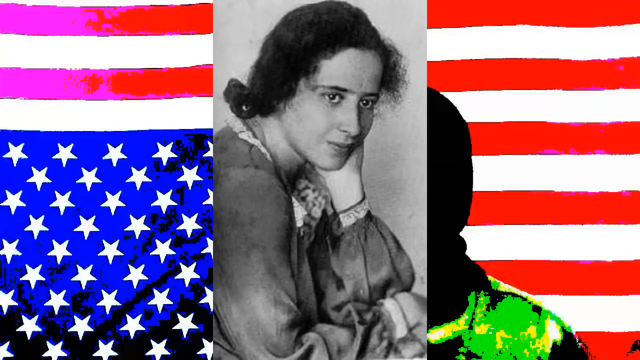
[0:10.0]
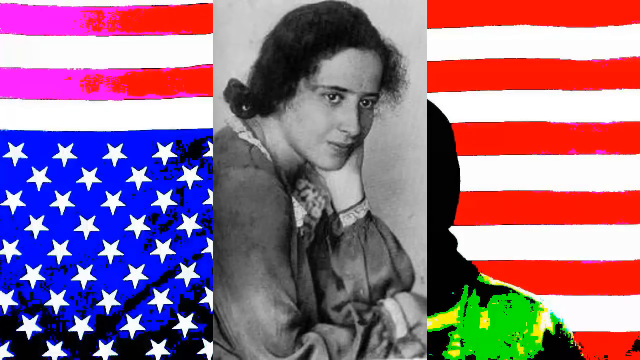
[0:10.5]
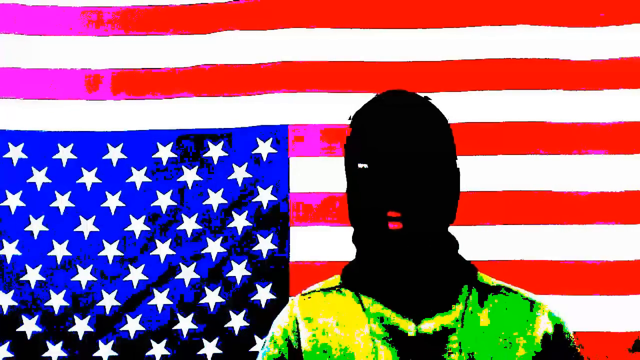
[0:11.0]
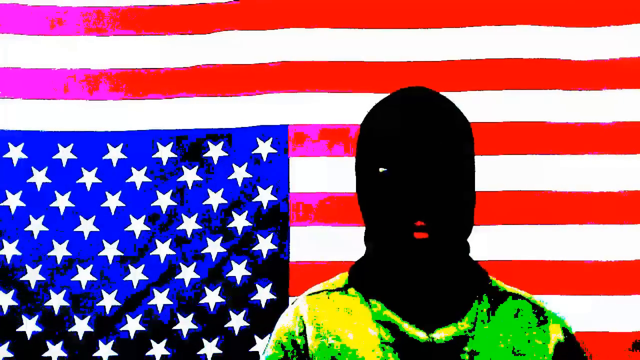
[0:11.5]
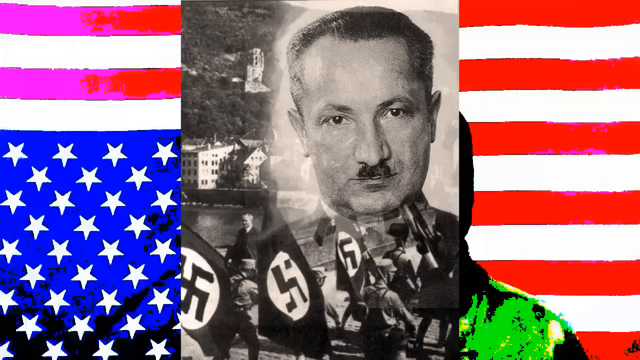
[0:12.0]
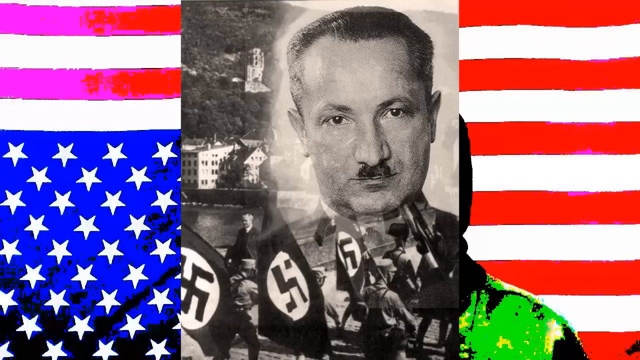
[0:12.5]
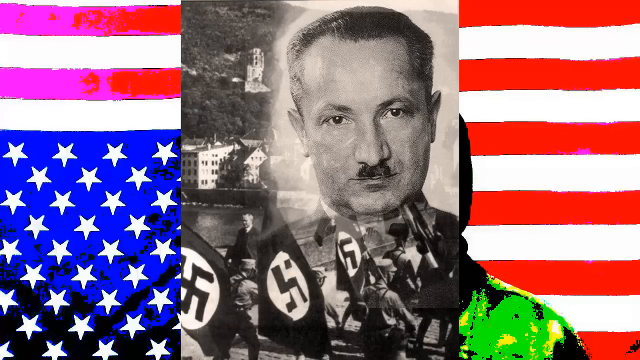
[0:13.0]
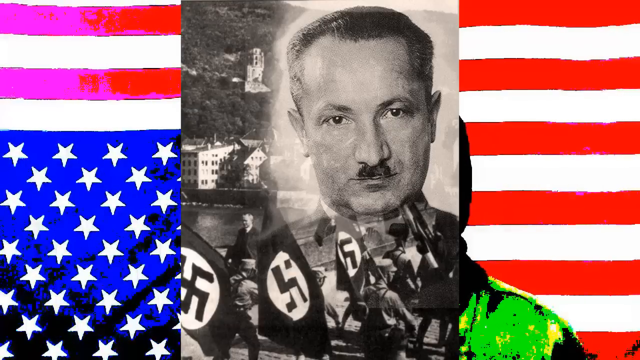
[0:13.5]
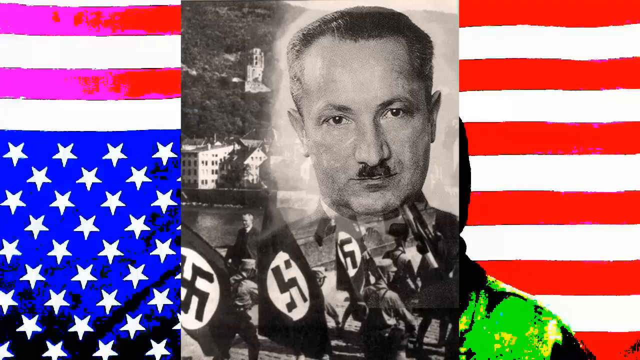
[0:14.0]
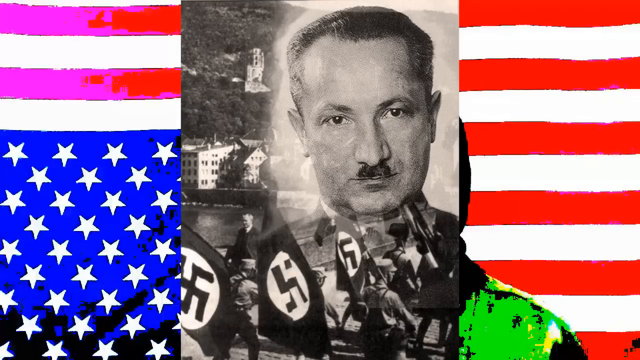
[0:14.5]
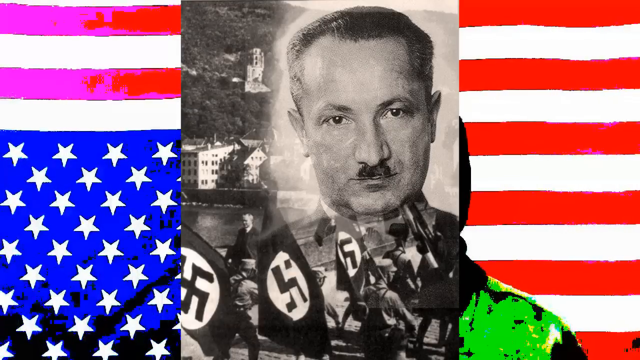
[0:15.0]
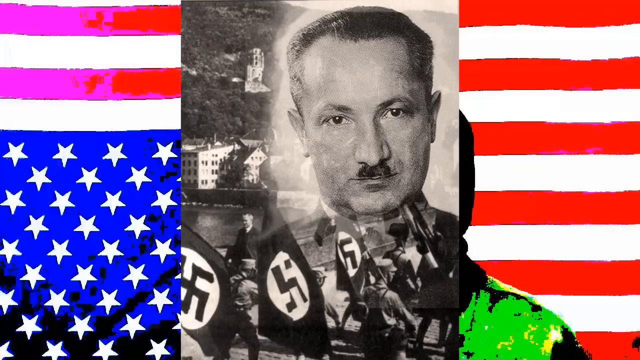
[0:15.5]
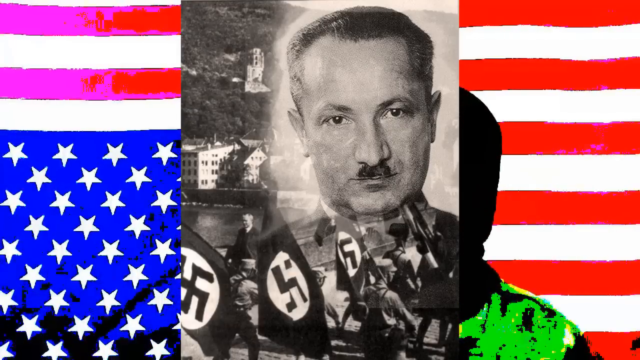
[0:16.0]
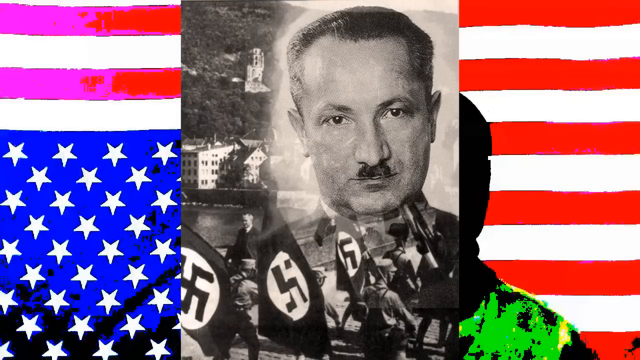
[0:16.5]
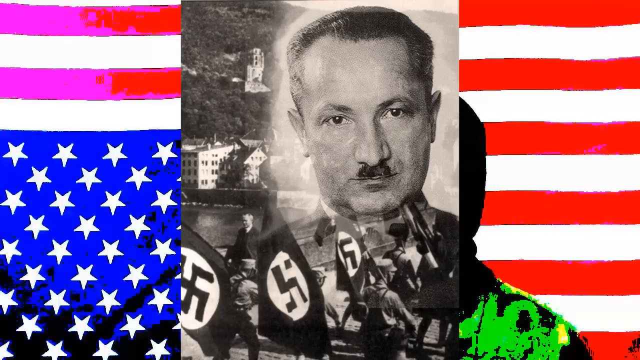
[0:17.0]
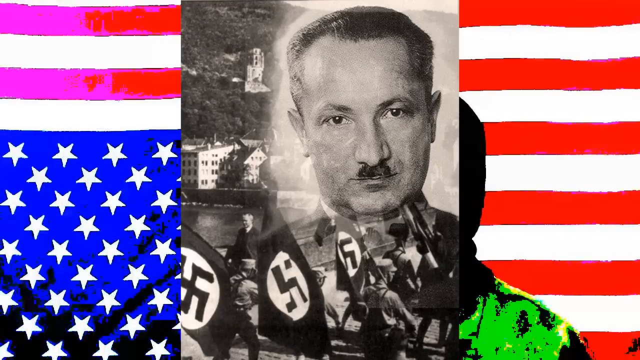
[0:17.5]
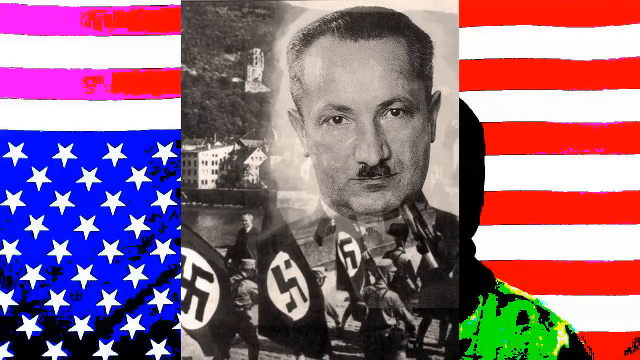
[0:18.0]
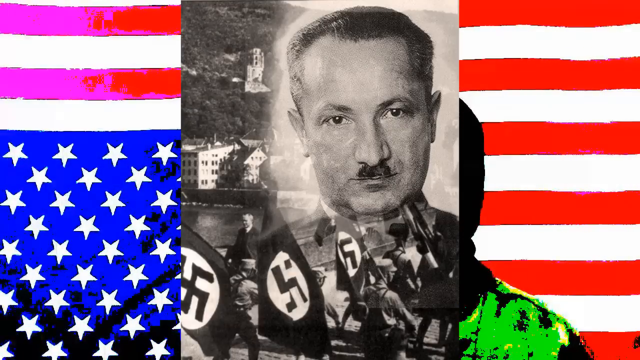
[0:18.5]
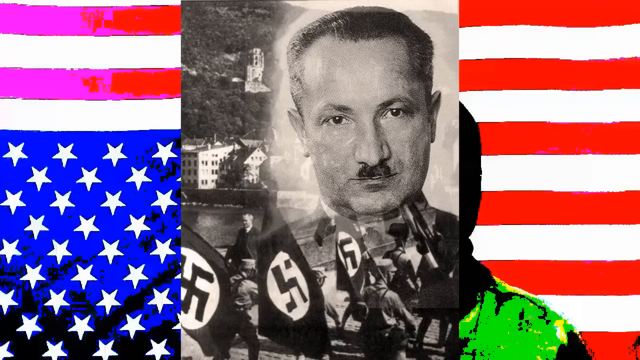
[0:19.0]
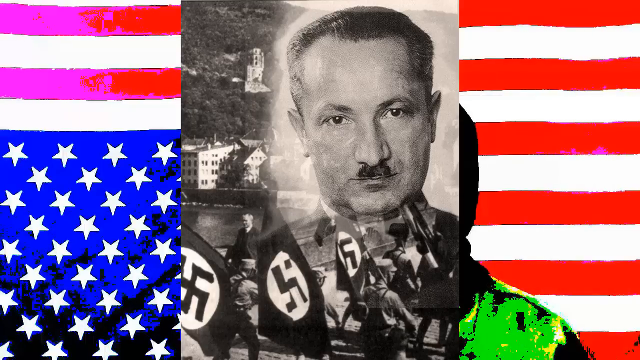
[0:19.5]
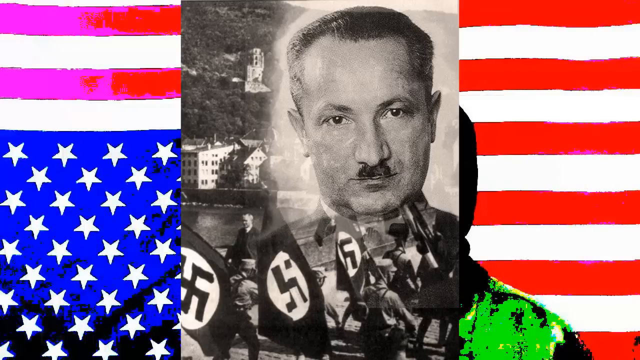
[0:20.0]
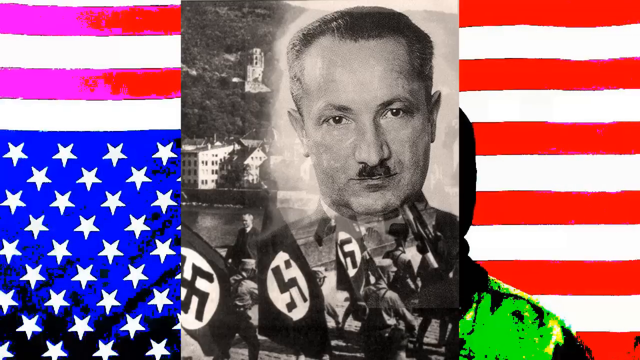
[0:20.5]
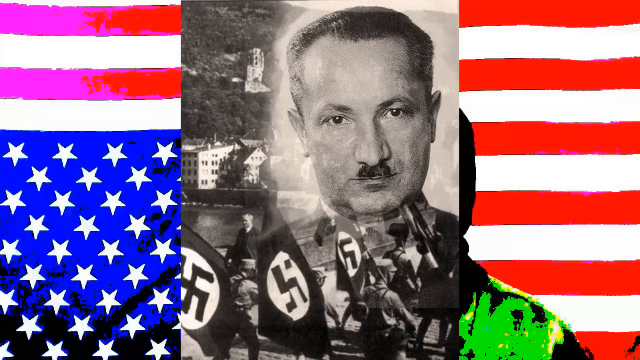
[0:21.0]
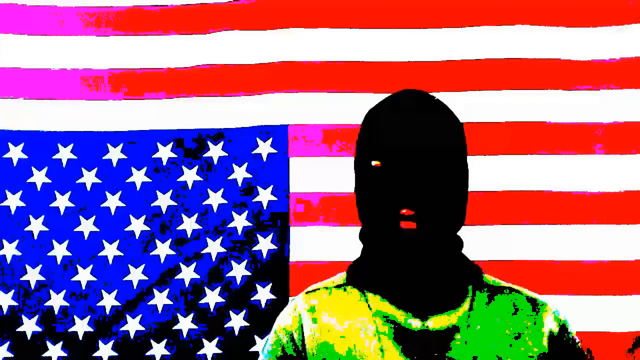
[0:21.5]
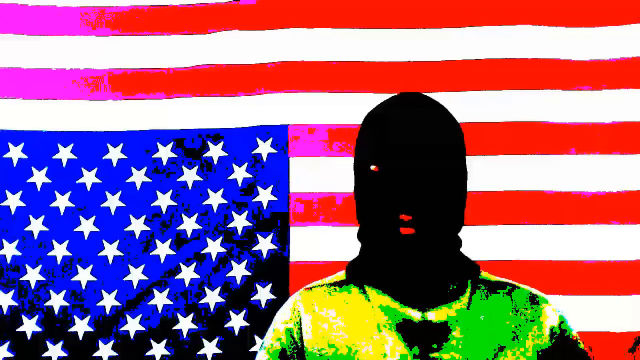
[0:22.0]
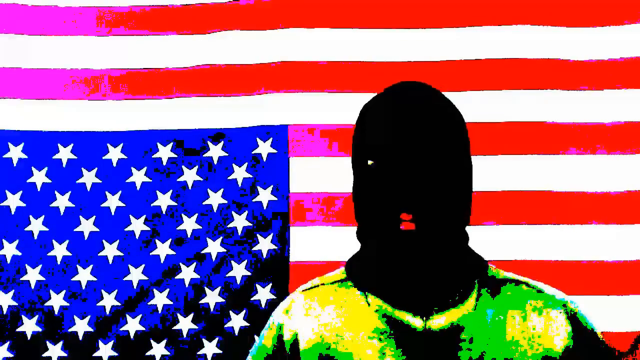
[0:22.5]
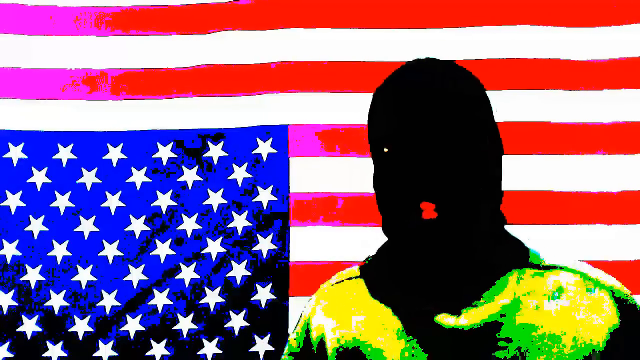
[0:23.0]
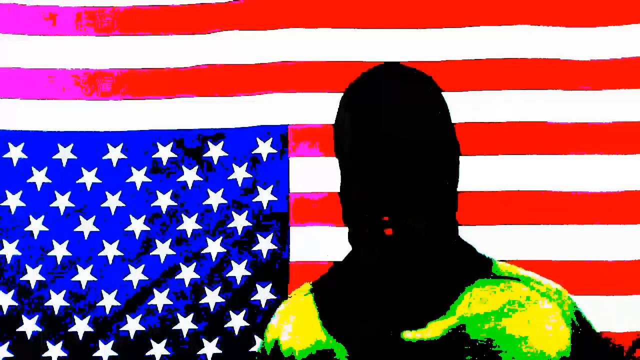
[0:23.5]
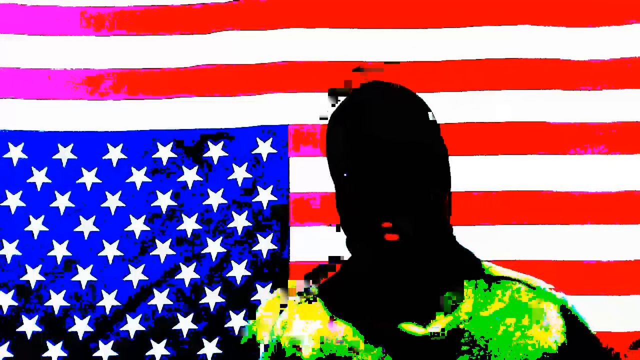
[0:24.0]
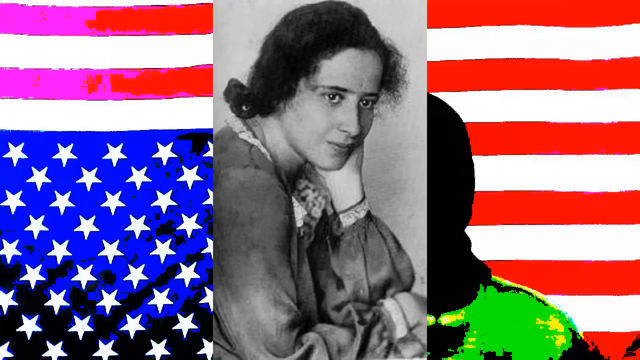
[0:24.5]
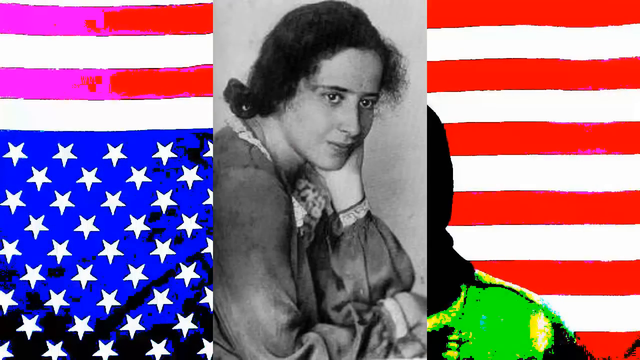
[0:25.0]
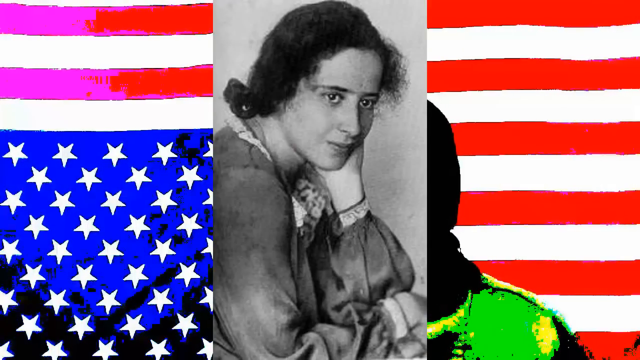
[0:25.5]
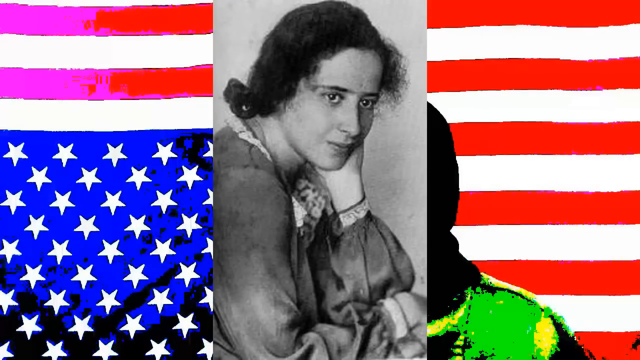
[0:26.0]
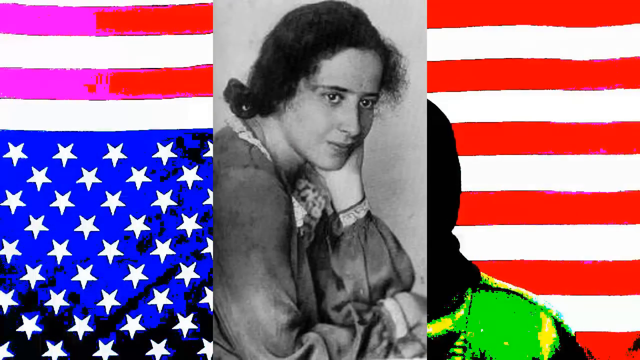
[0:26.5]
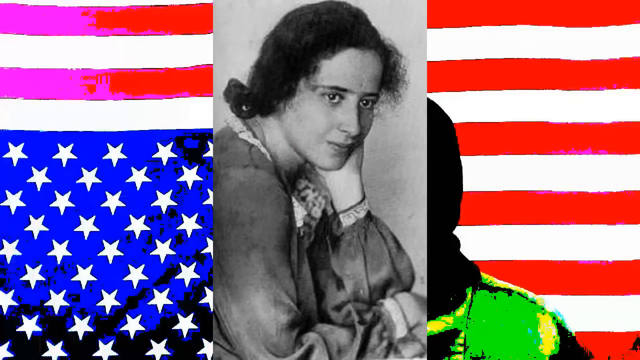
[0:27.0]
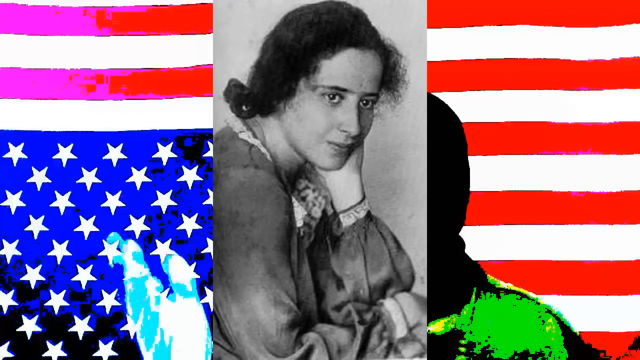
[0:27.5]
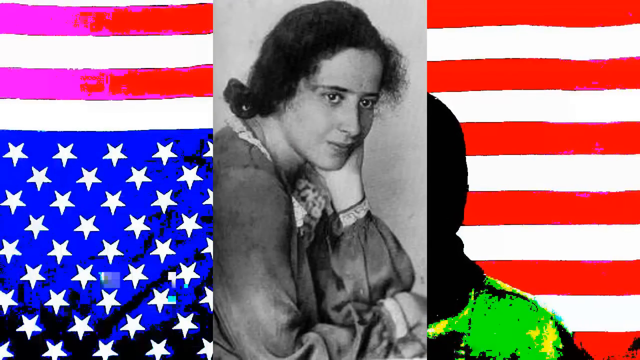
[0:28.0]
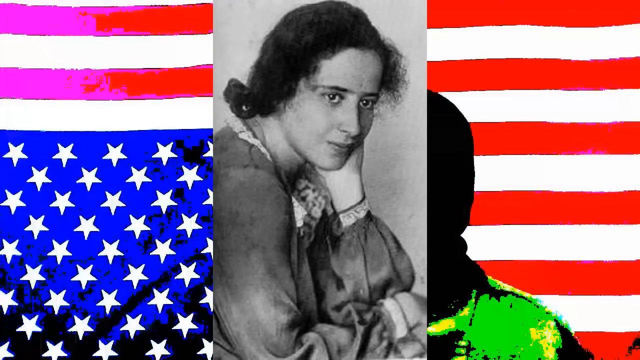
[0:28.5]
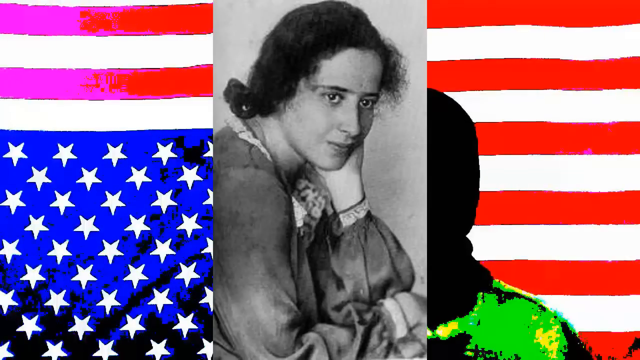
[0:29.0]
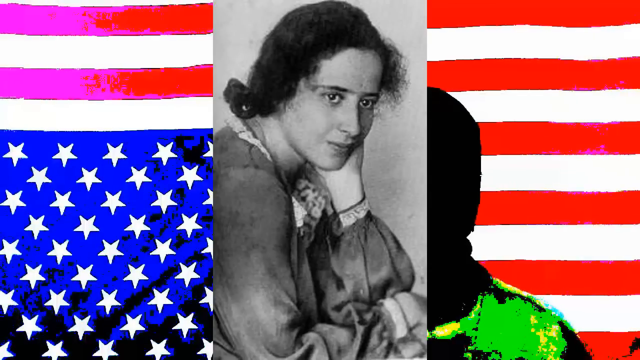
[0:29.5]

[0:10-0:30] A black-and-white photo of a woman with dark hair is oriented vertically in the center of the screen. In the background is an upside-down American flag, with the dark silhouette of a man on the right side whose face is obscured. The video cuts to a black-and-white photo of a man with a Hitler mustache, with Nazi flags in the background. Further behind are buildings next to a body of water and a sloped hill going upward. On the left side, the American flag in the background sort of cuts in and out of color: the red stripes switch between red and pink, and the blue behind the stars at the bottom switches between blue and black. In between the images appears a man apparently dressed in a black ski mask, with only his lips and eyes visible; his shirt is apparently green.